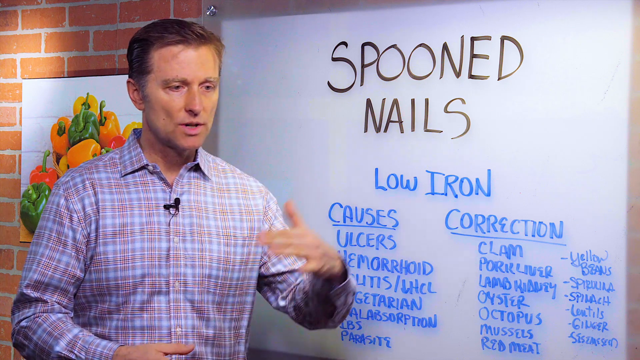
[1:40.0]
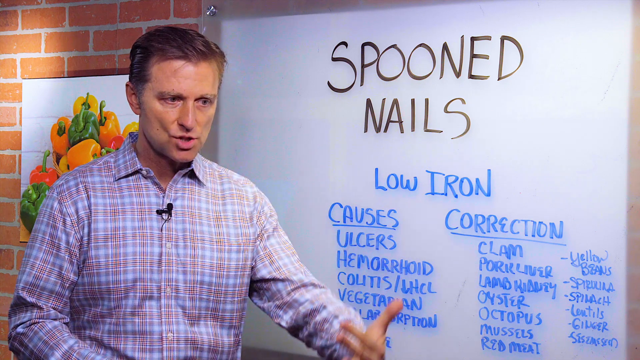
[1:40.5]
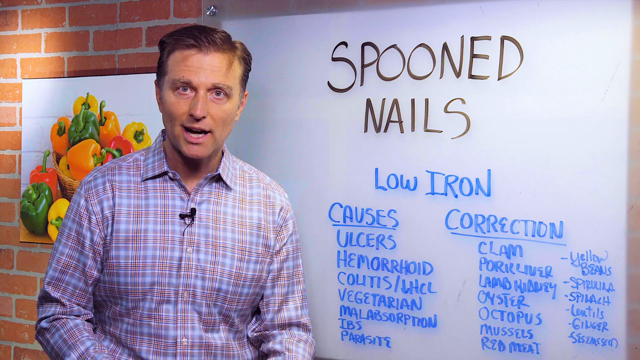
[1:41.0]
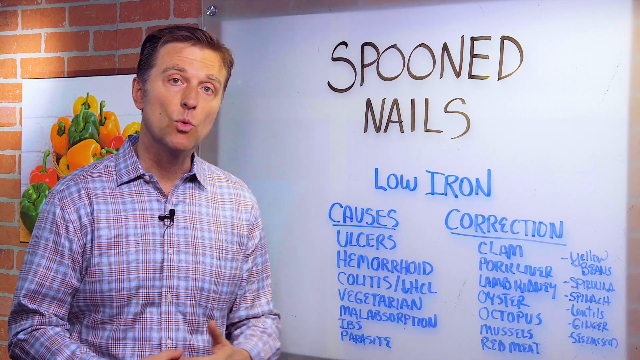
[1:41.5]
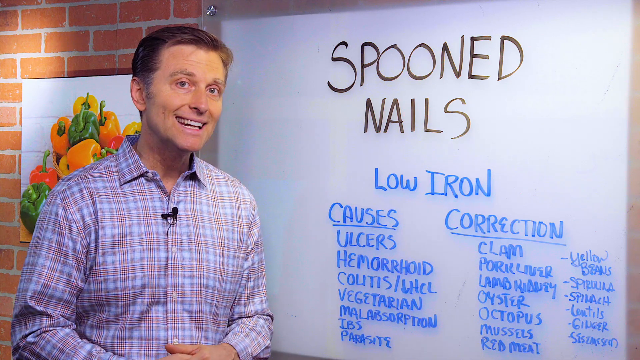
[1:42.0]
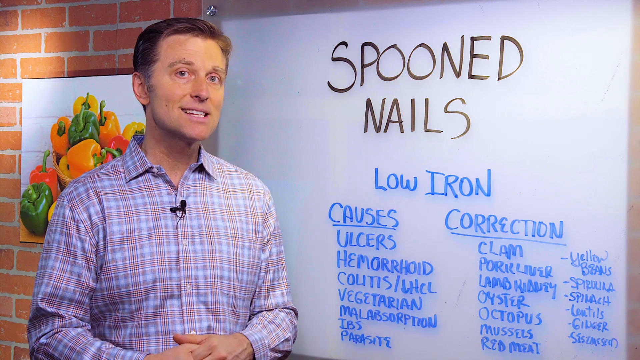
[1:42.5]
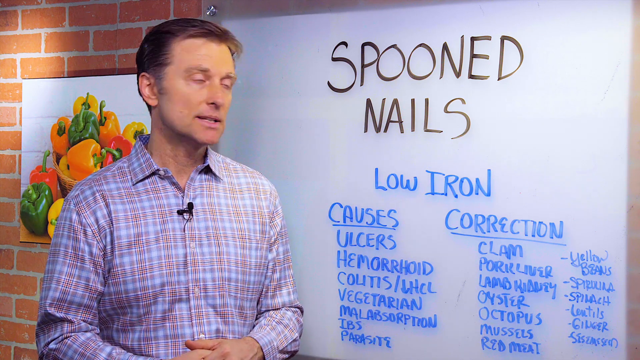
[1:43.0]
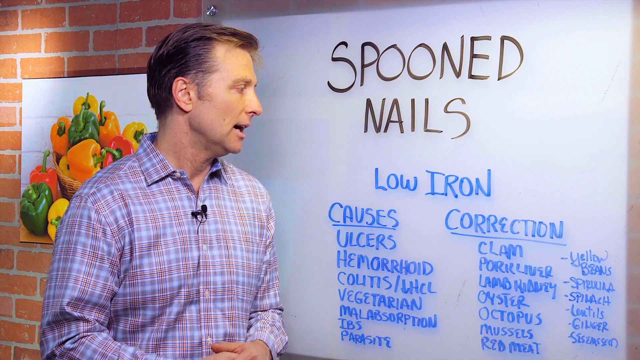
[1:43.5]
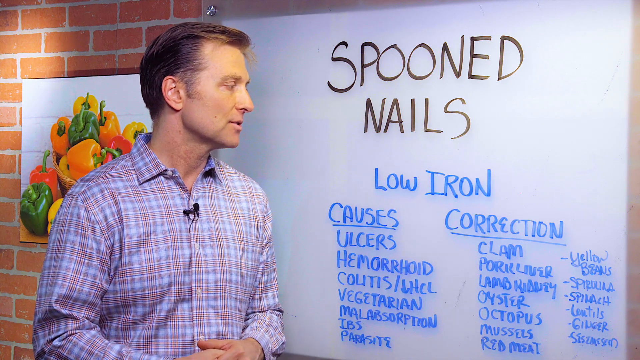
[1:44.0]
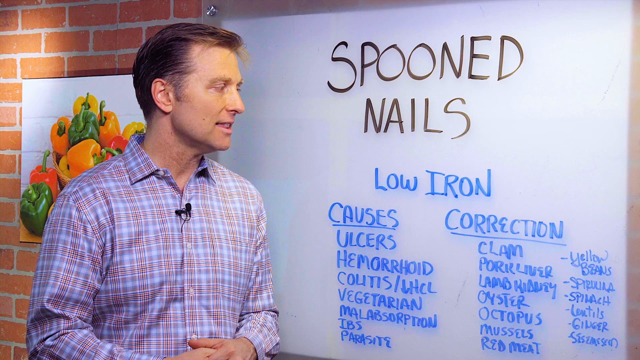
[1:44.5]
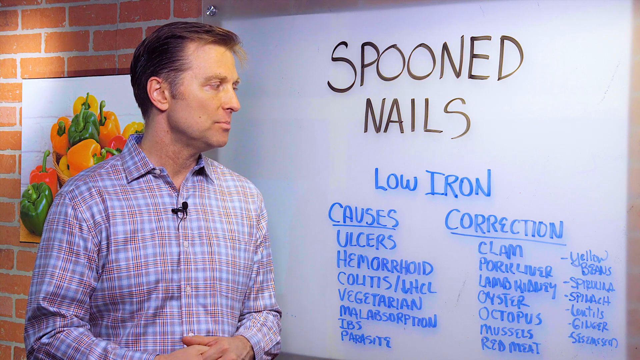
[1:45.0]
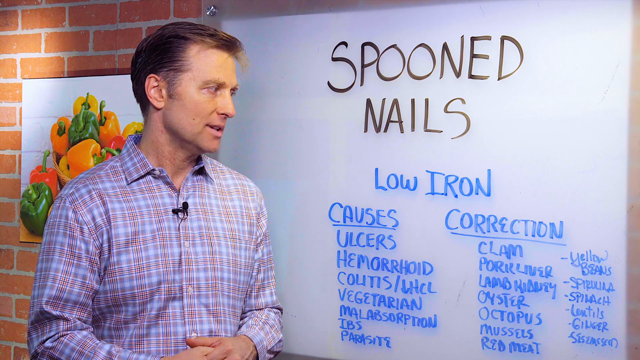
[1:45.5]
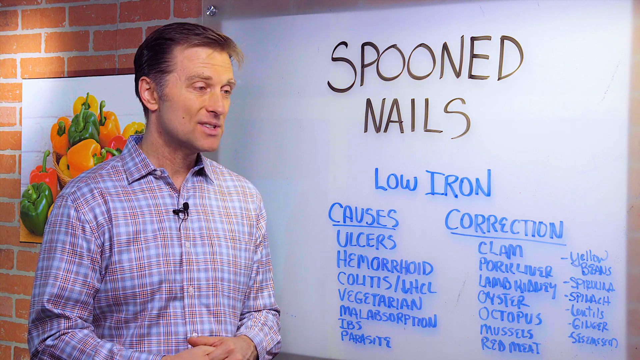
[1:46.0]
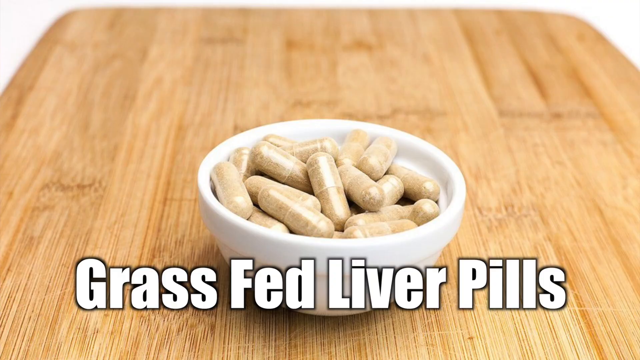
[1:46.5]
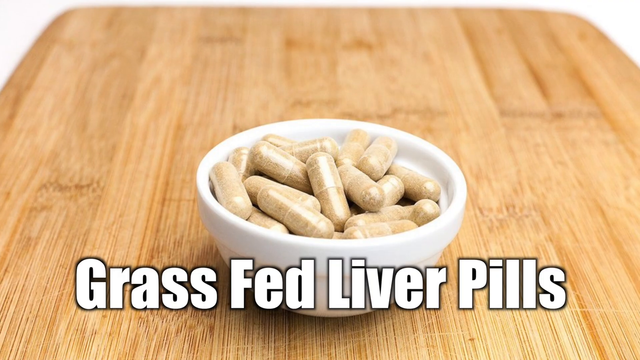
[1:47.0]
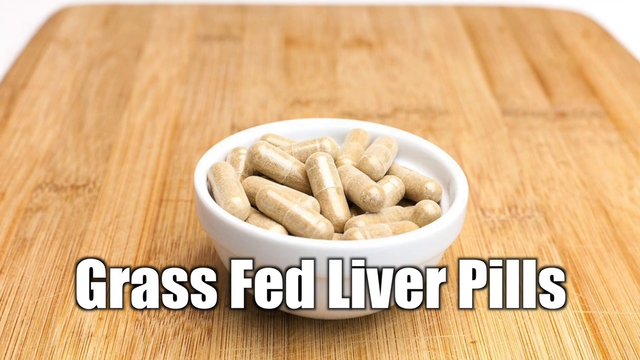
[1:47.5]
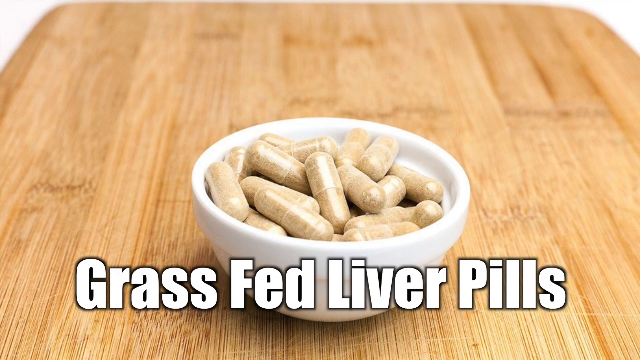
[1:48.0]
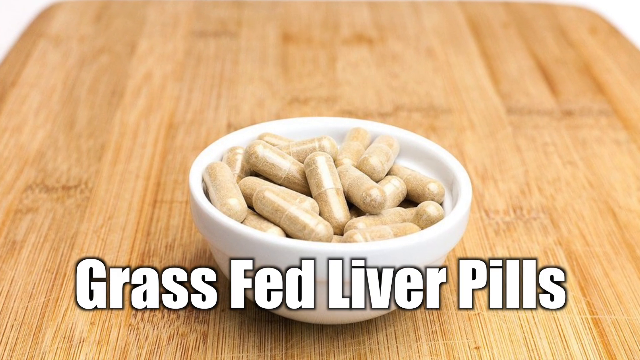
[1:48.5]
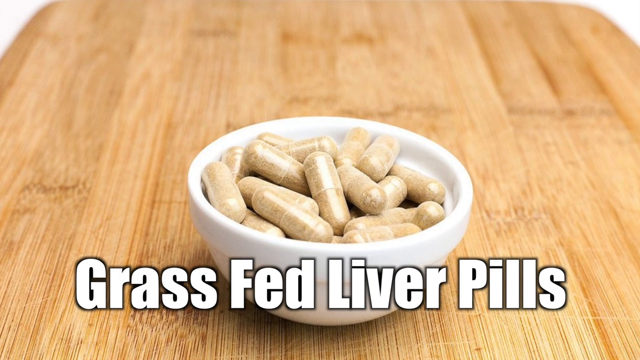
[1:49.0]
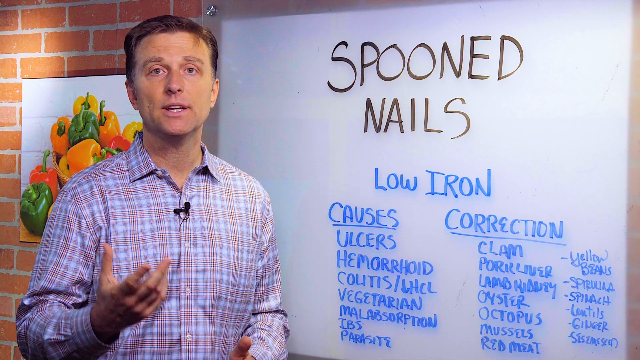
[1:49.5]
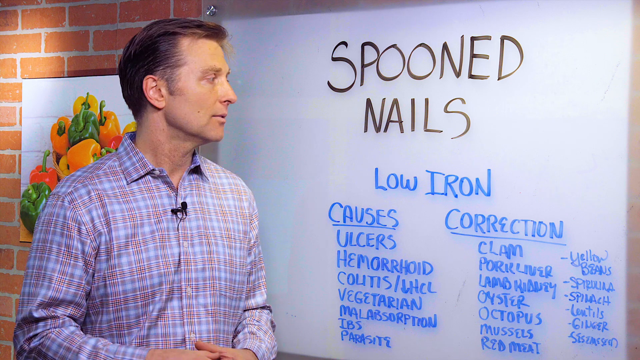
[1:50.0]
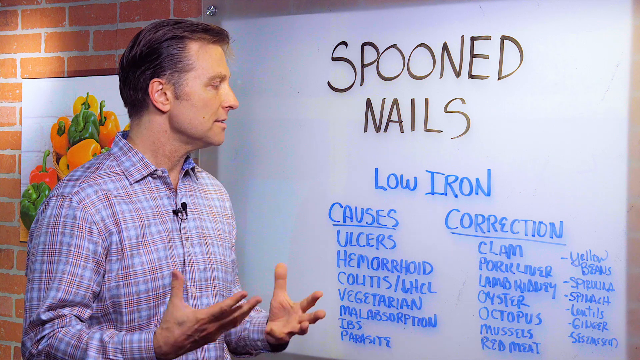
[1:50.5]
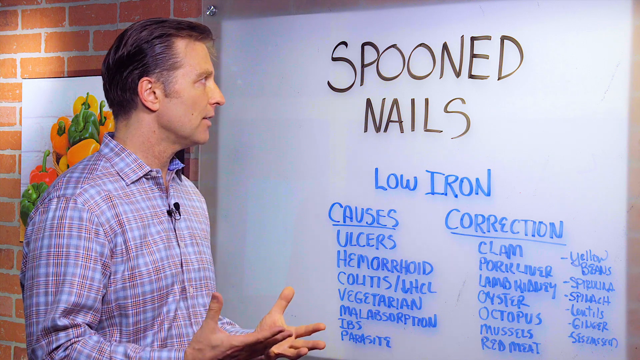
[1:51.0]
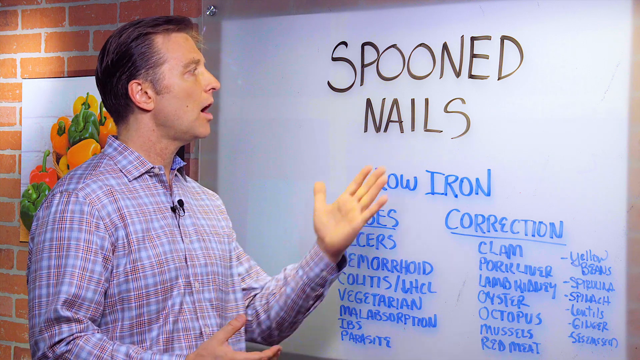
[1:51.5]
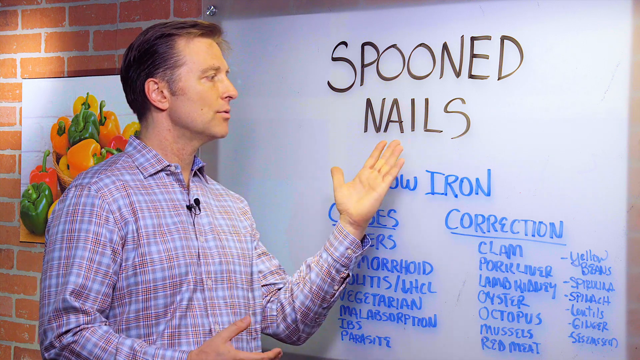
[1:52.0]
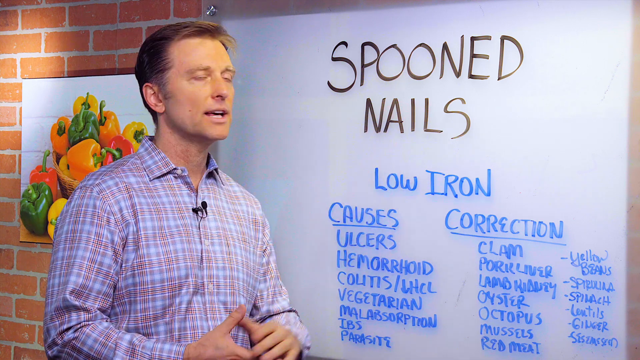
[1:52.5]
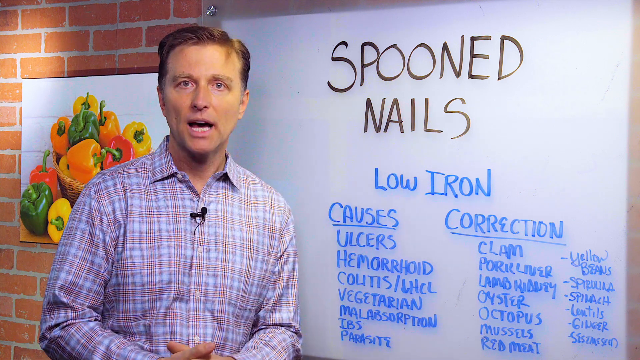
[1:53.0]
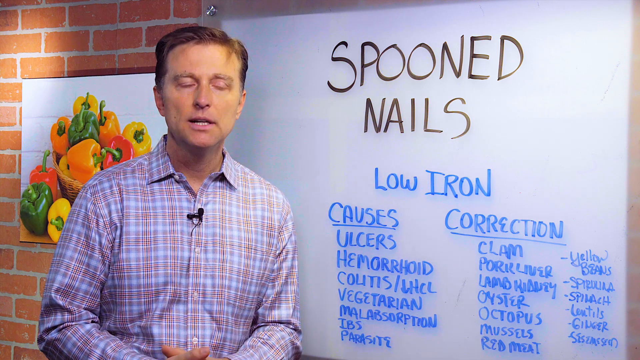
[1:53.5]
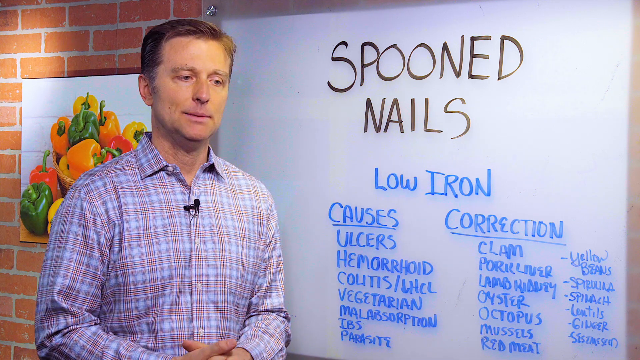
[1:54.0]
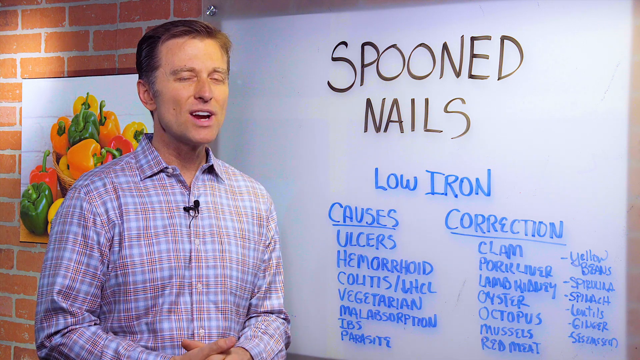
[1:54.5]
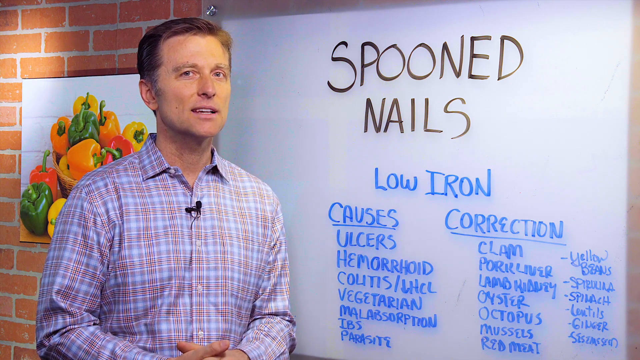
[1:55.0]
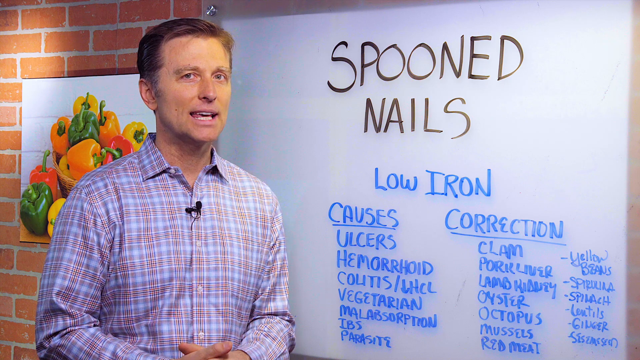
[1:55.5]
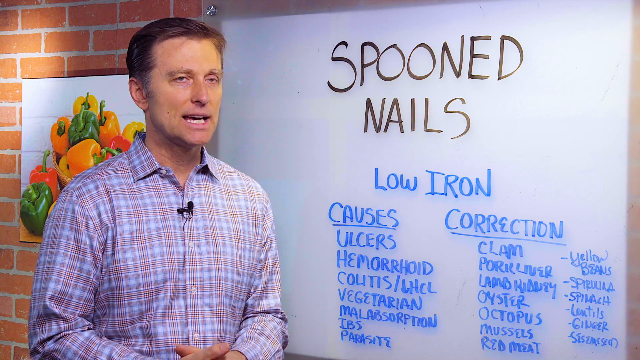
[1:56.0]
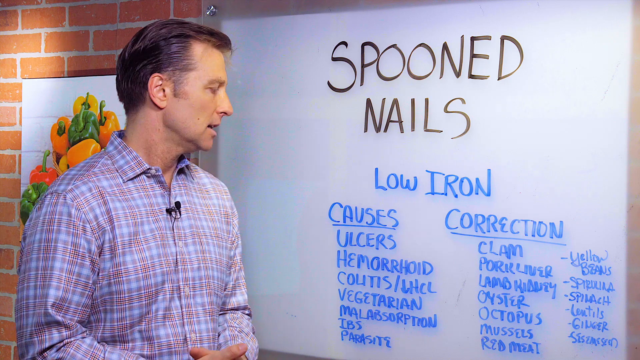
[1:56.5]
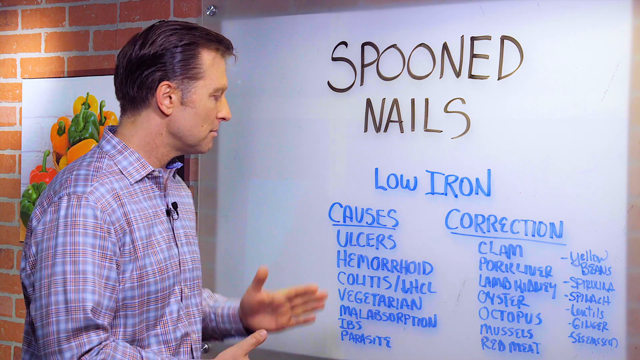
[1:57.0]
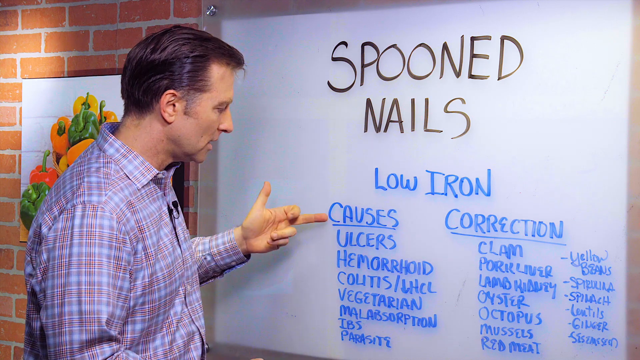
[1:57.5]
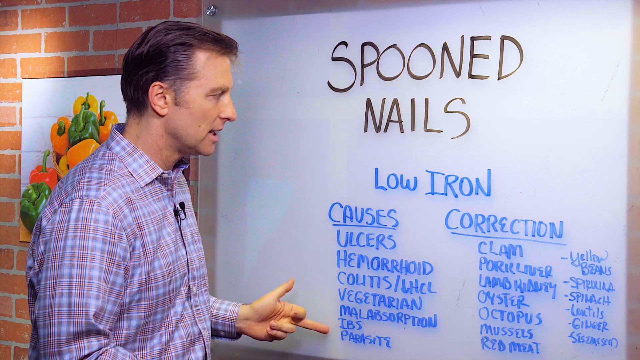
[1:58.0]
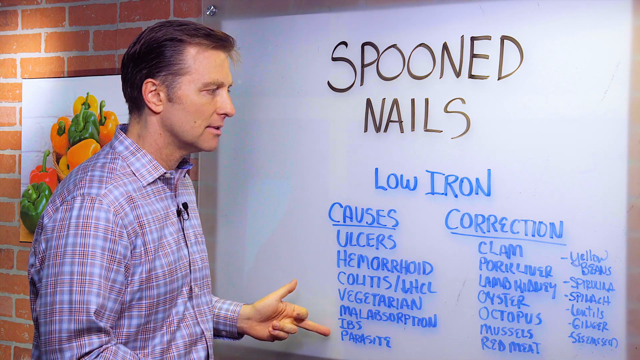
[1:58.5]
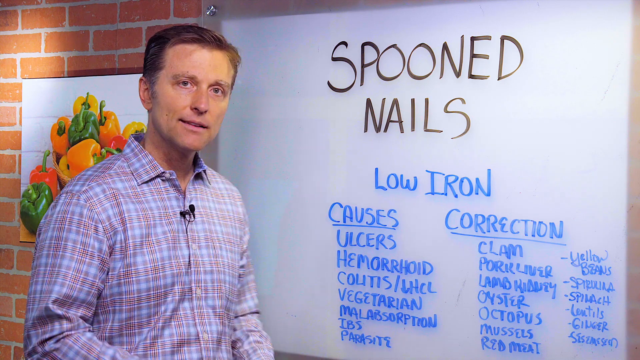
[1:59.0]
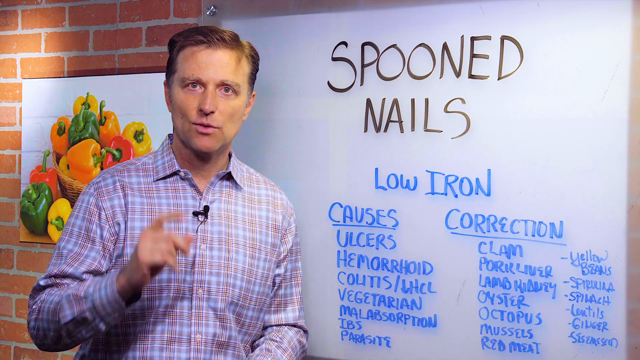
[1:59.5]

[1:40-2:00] The setting is like a classroom, with an exposed brick wall. A Caucasian man in his 40s with dark hair, a microphone clipped onto his button-up shirt, talks into a camera next to a white dry erase board covered with a bunch of words, some written in black and some in blue. He is smiling but seems very serious. He turns his head toward the board and kind of angles his nose downward as if explaining something. The video then cuts to a computer-generated image of a butcher block with a tiny white porcelain bowl holding a bunch of brown capsule pills, with white letters reading "grass fed liver pills". After a pause of a few seconds on it, the video returns to the man, who is still talking. His hands come into the frame as he lifts them and gestures with them, then puts them down, points with his left hand at the word "nails" written on the board, lowers his hands, and continues talking into the camera.